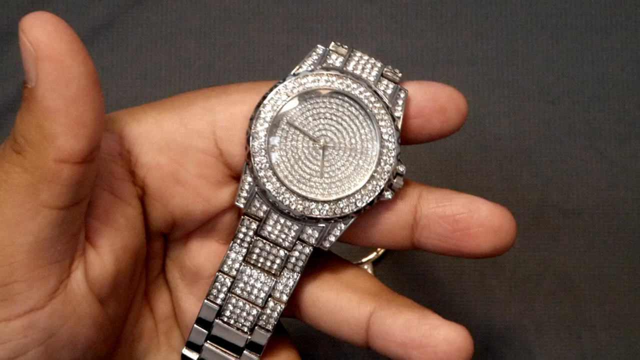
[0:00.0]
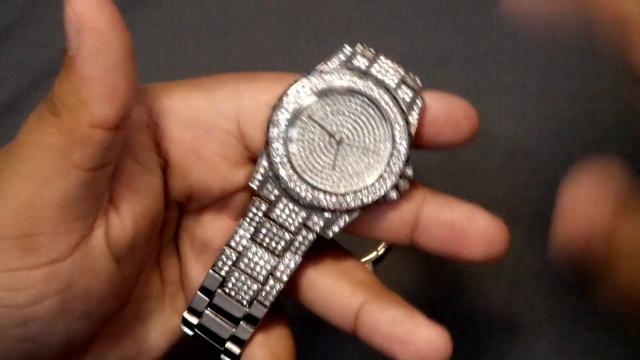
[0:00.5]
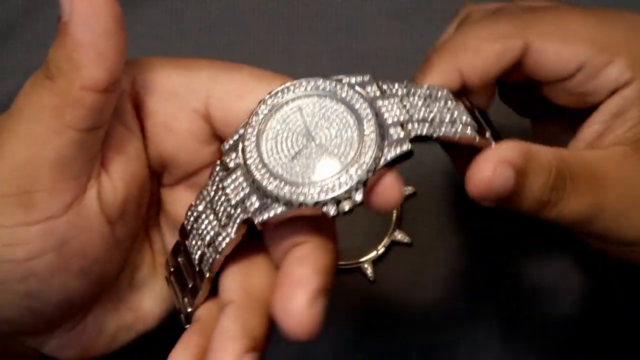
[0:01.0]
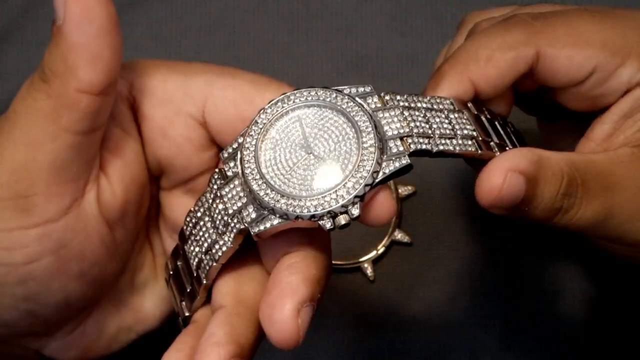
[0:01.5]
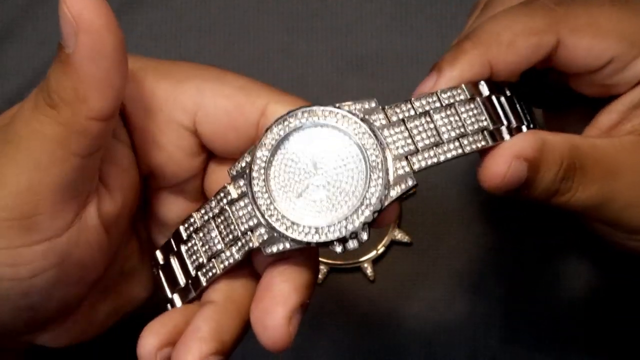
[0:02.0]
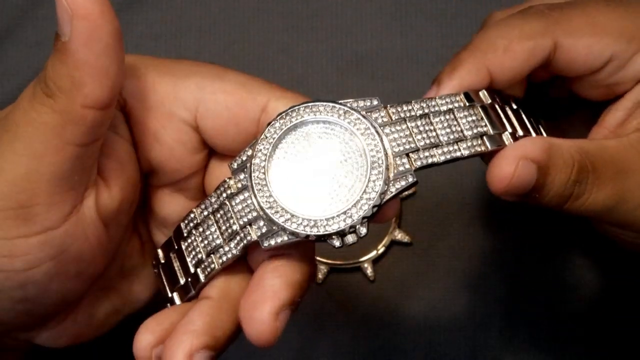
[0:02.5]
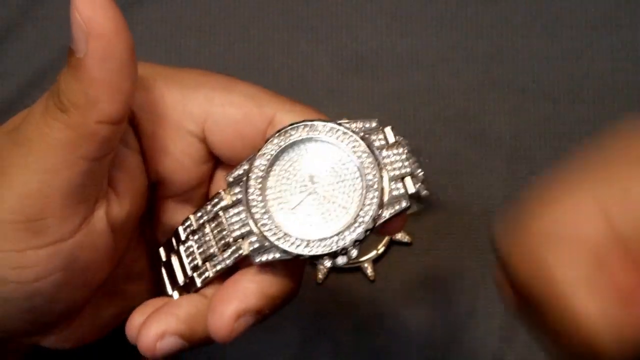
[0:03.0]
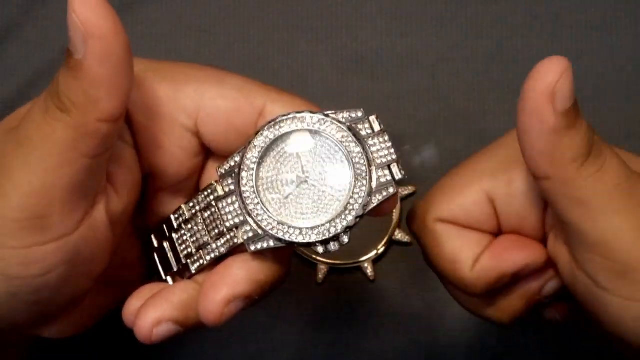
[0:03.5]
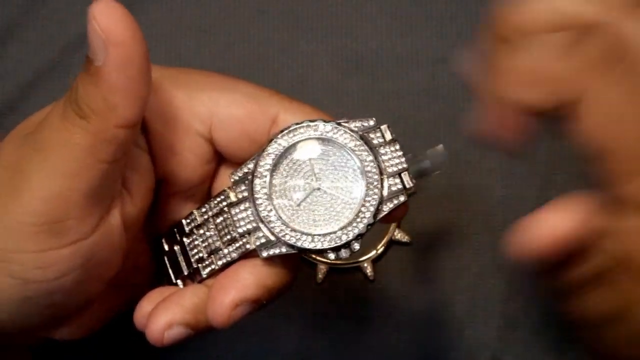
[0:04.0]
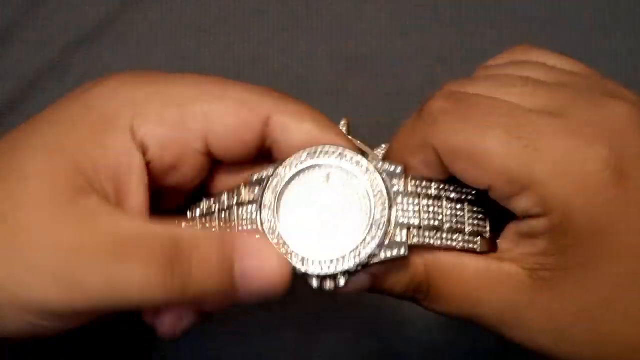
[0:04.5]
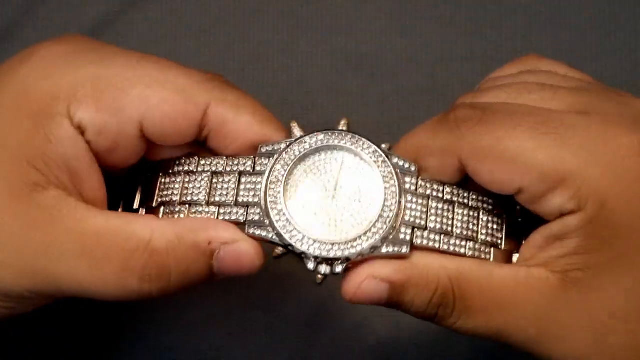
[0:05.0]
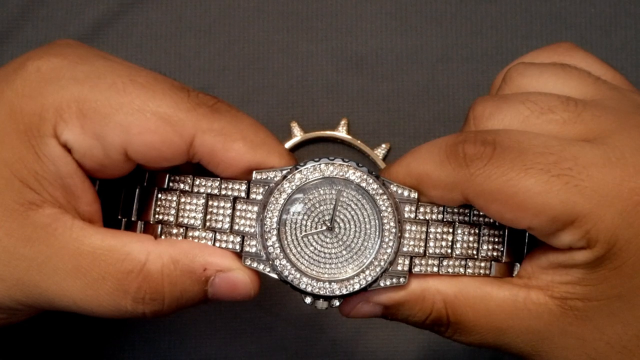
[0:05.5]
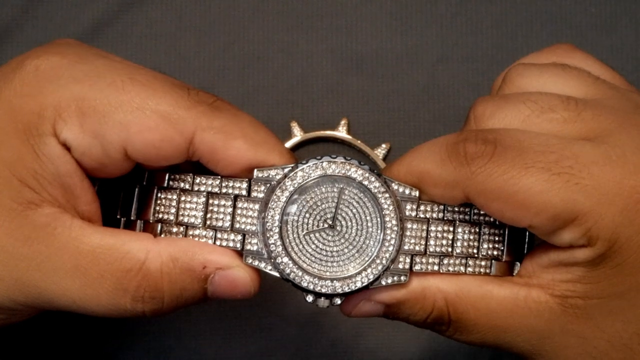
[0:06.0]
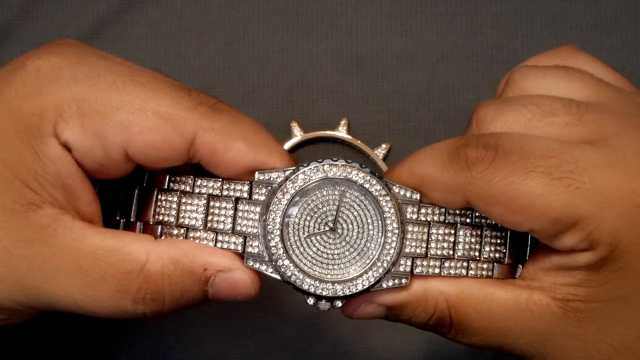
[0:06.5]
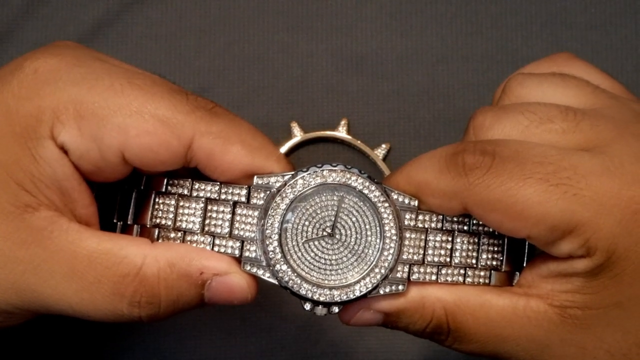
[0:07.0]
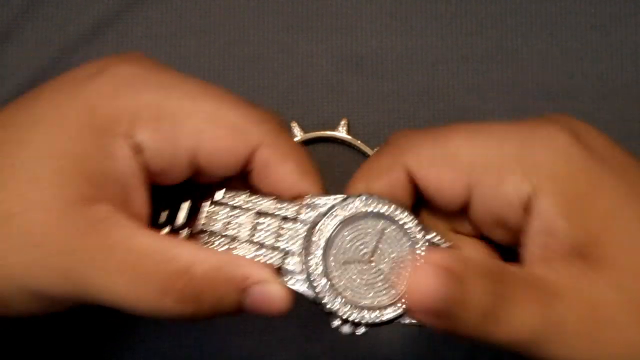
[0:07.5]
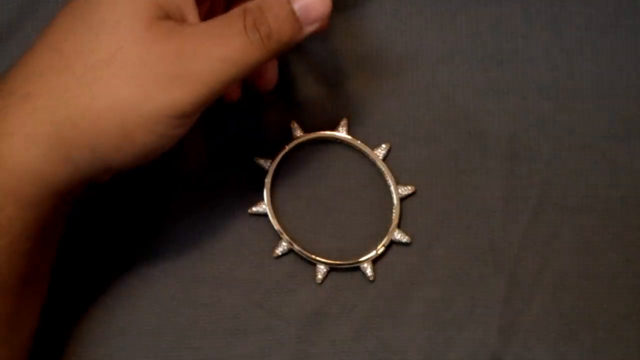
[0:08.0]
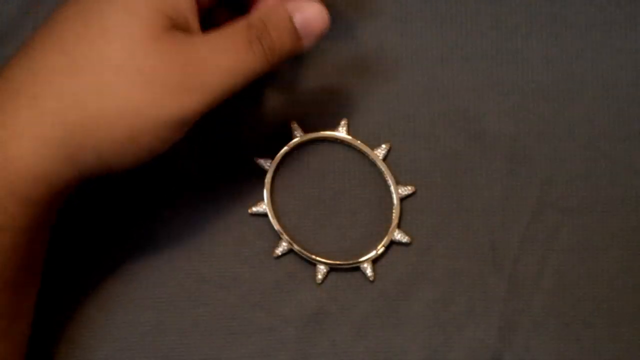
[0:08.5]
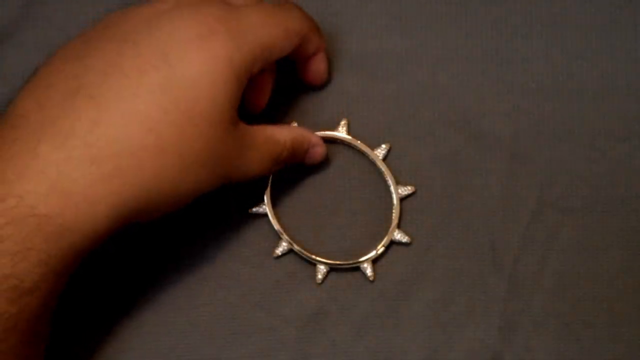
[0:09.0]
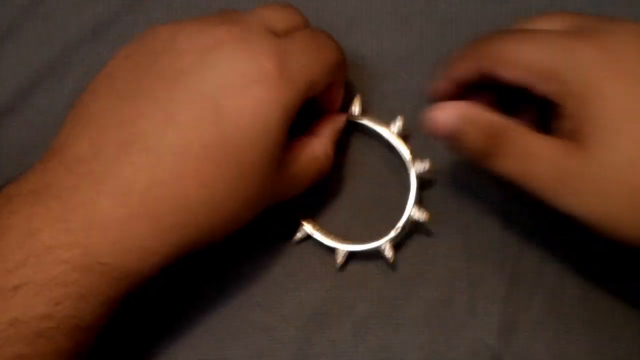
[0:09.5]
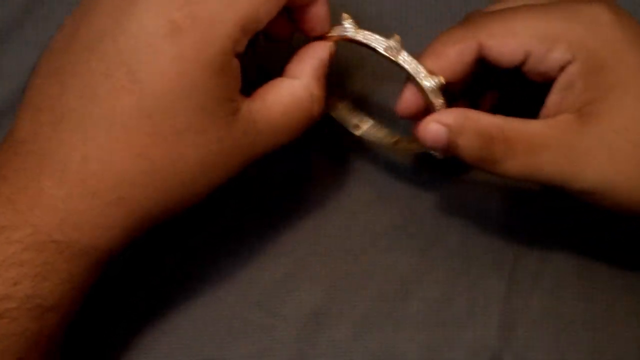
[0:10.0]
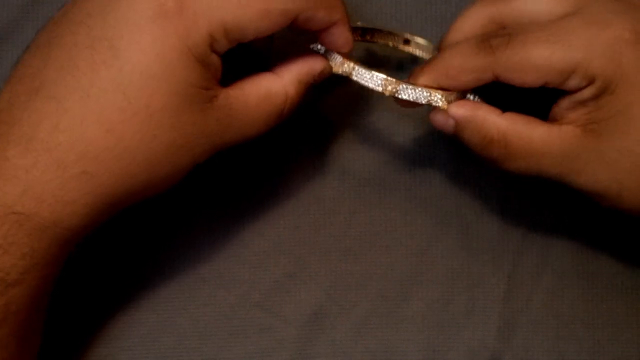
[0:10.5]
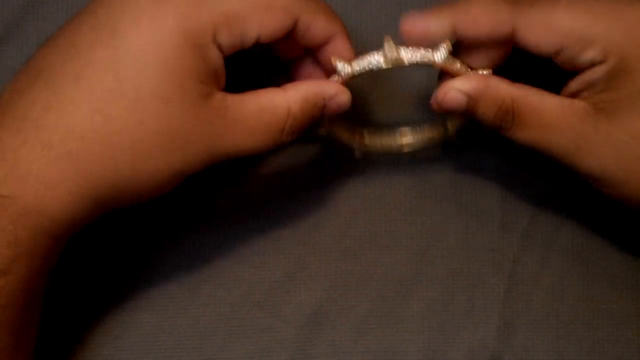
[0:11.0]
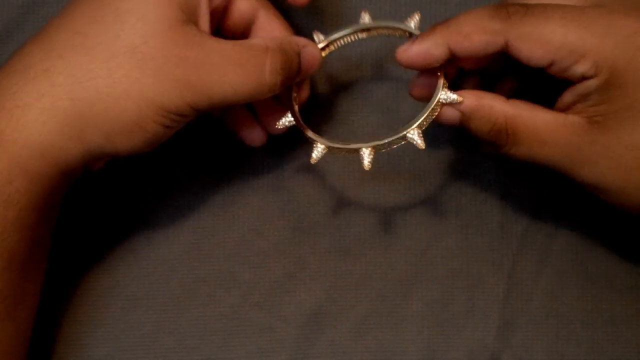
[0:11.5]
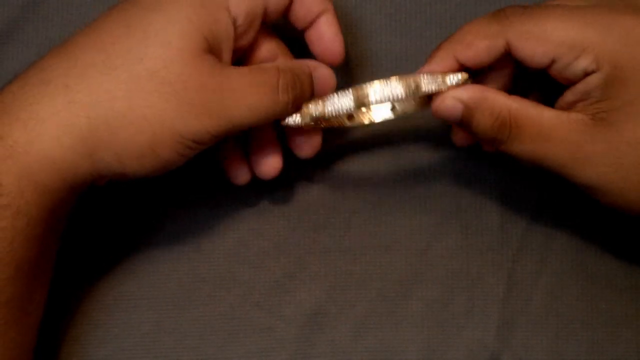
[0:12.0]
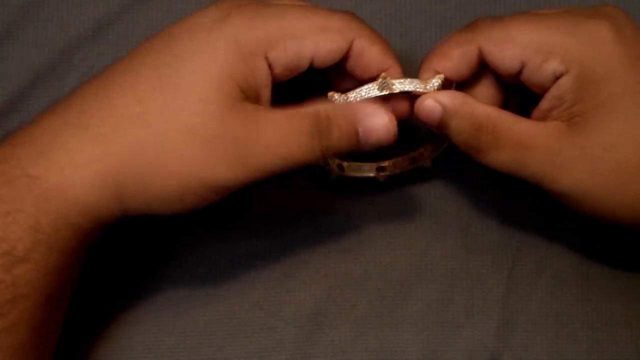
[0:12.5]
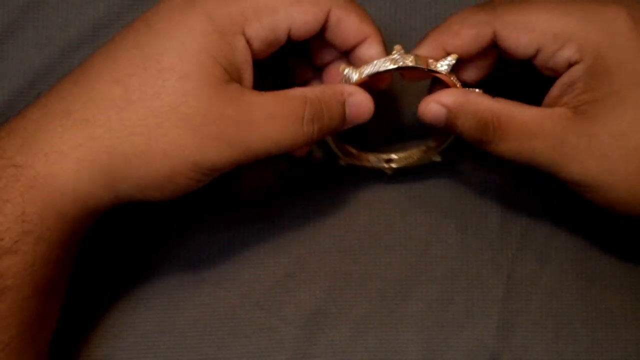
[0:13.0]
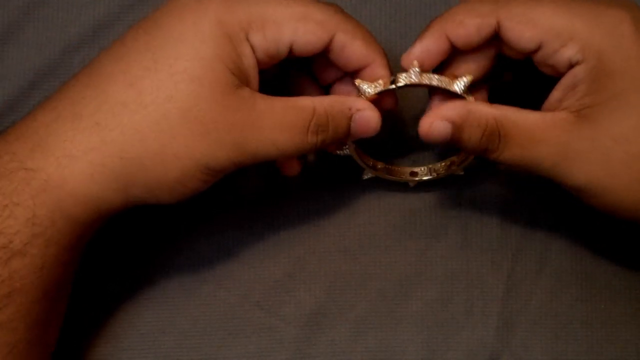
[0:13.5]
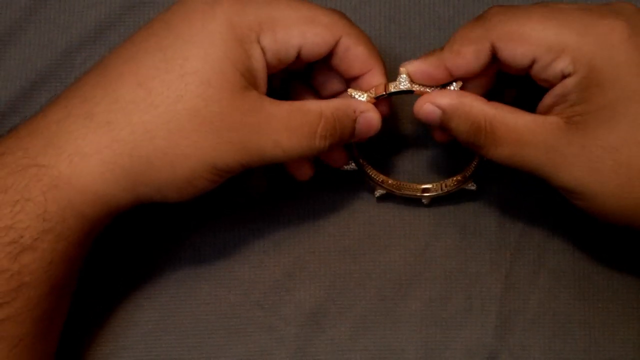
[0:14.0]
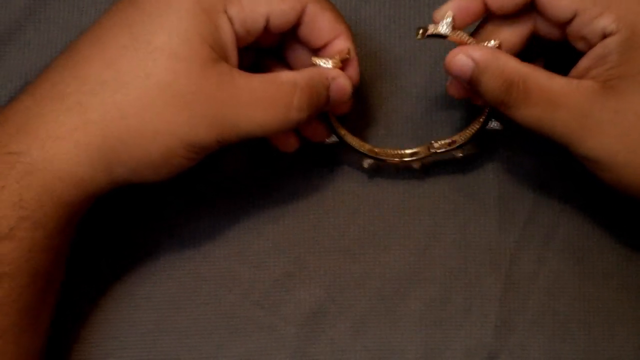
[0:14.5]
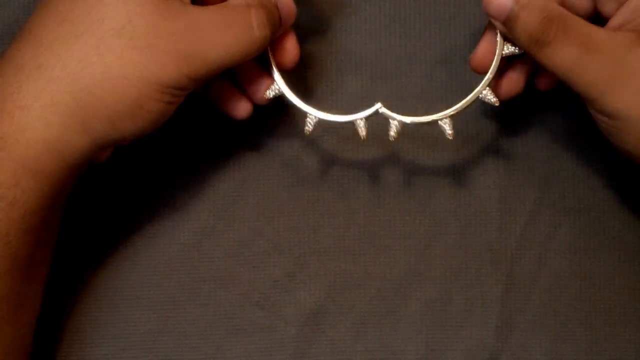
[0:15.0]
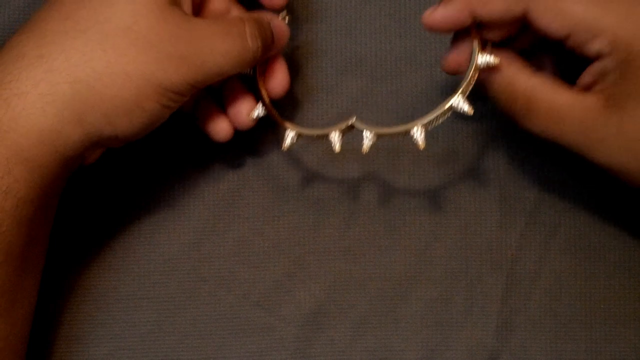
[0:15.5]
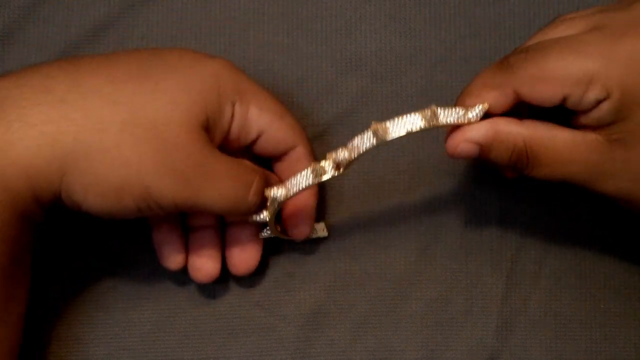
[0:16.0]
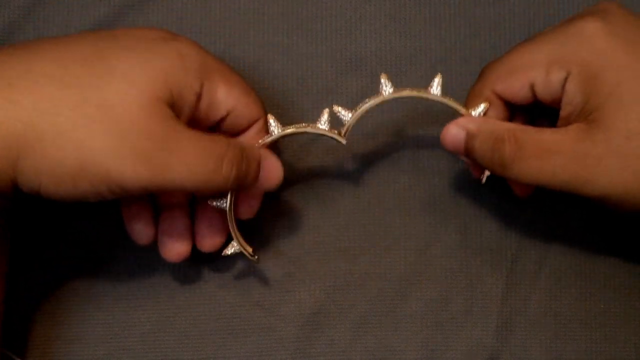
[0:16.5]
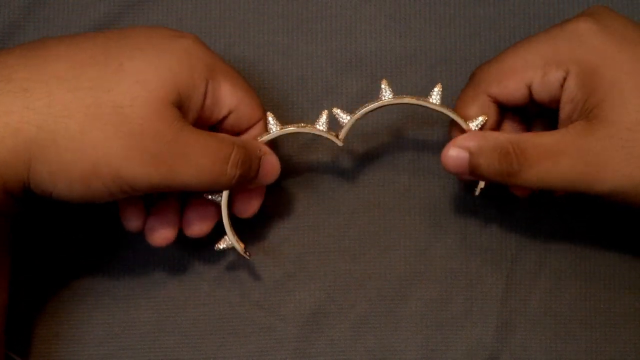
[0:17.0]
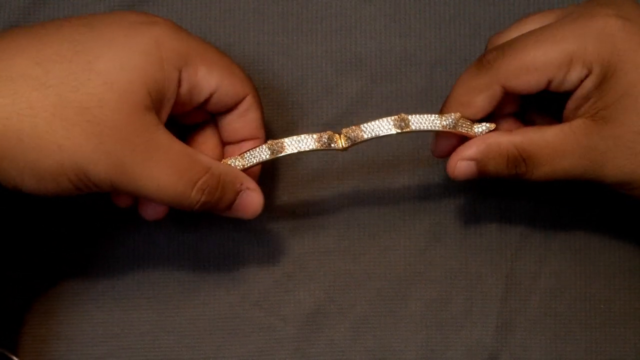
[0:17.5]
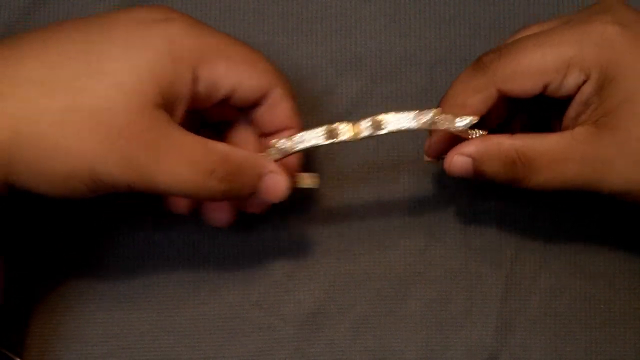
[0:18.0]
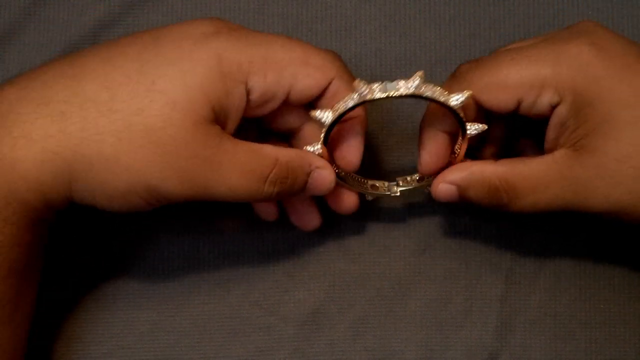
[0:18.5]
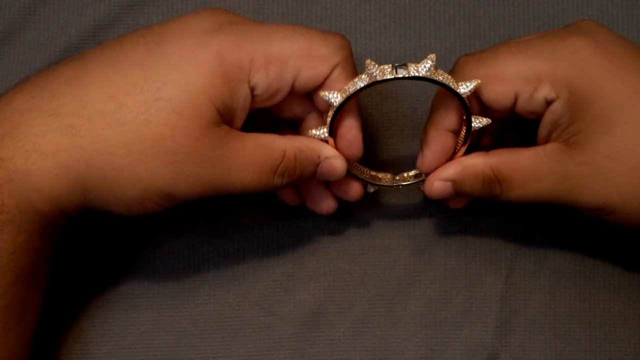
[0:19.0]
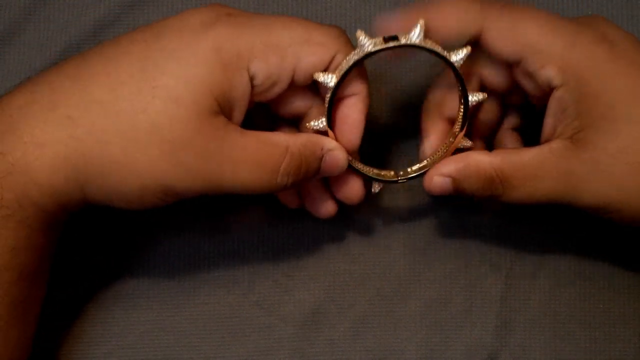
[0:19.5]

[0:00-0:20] Two hands hold a watch, then put the watch aside. Next they hold something that looks like a bangle, which can be opened so a hand can be put inside, and it is then closed. The watch is silver. The person holding the items gives a thumbs up. The person's hand rests on a black cloth, where they look at everything they are holding.